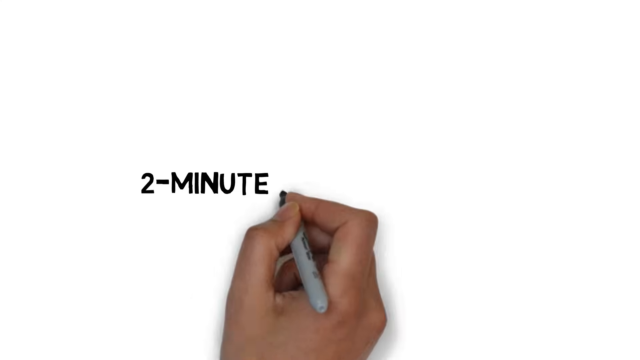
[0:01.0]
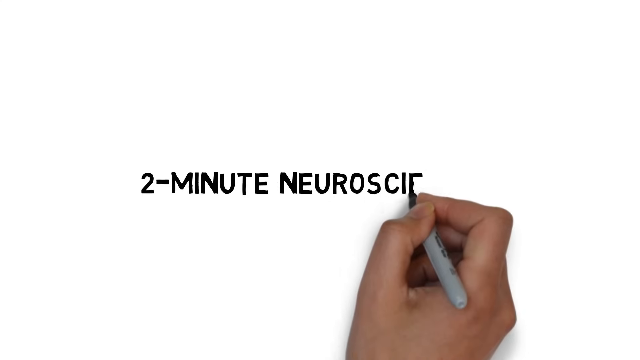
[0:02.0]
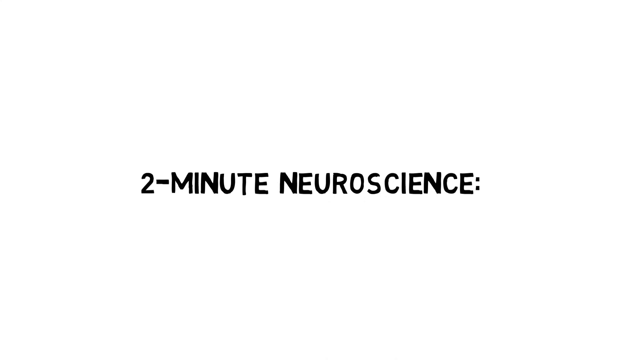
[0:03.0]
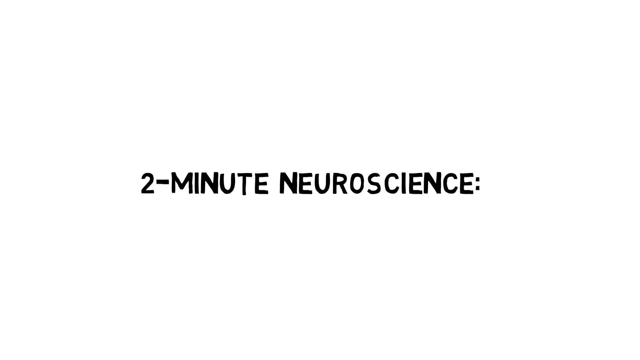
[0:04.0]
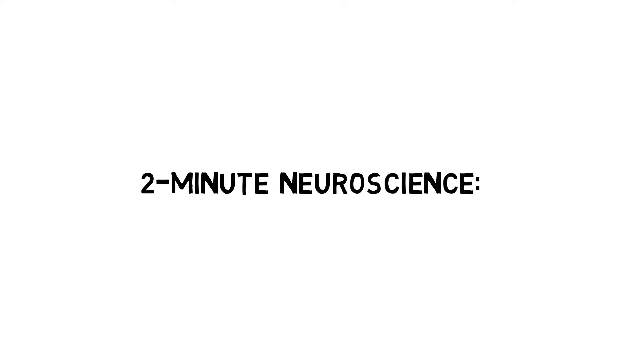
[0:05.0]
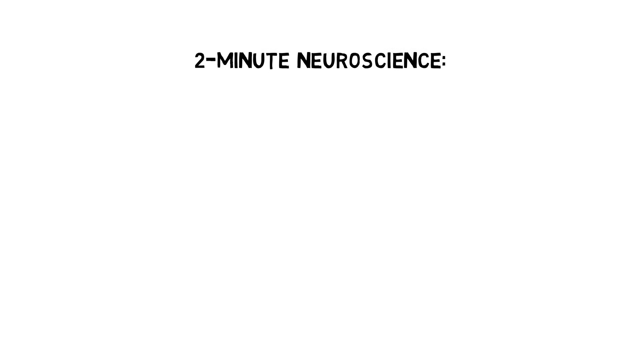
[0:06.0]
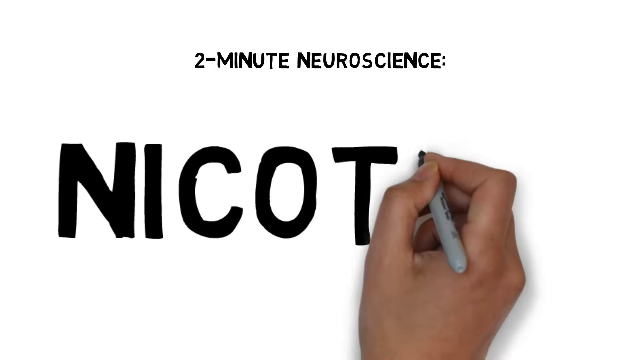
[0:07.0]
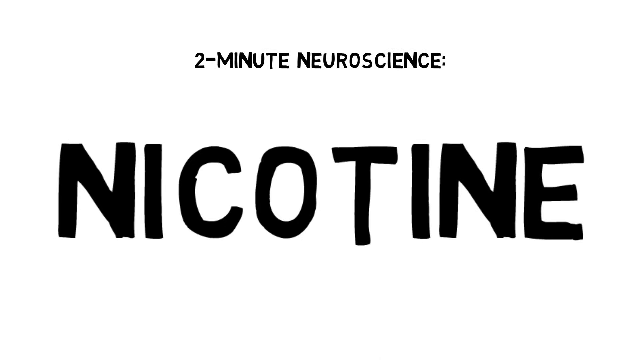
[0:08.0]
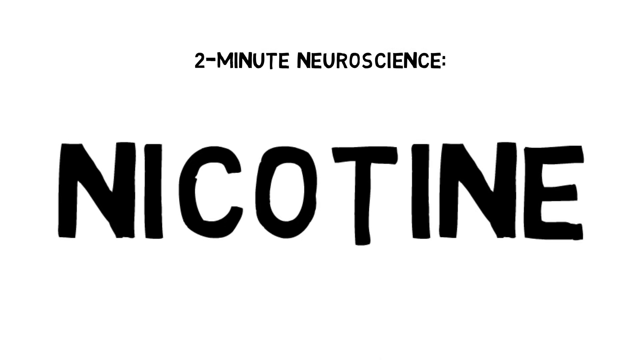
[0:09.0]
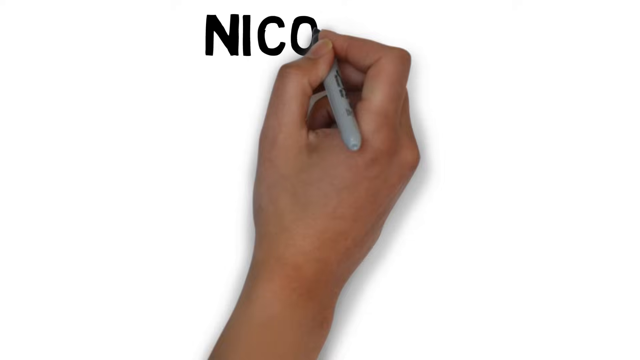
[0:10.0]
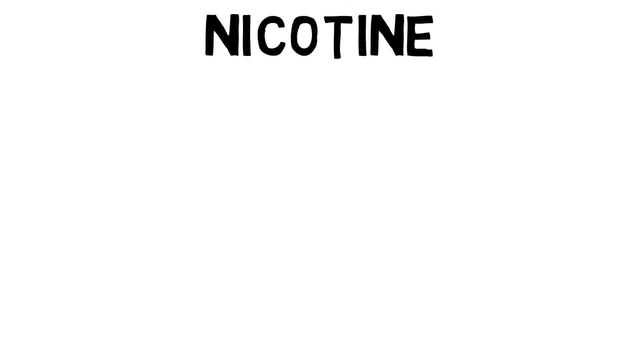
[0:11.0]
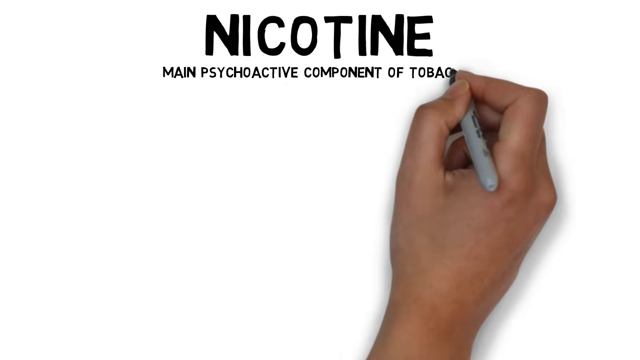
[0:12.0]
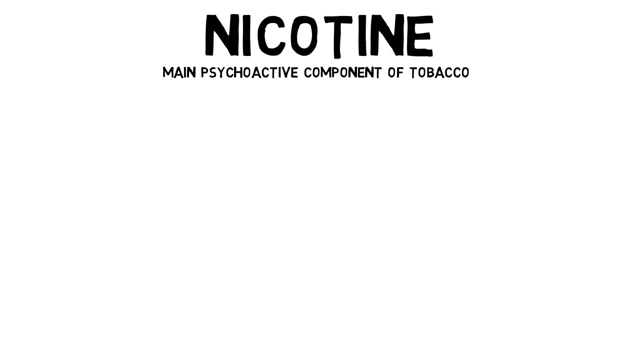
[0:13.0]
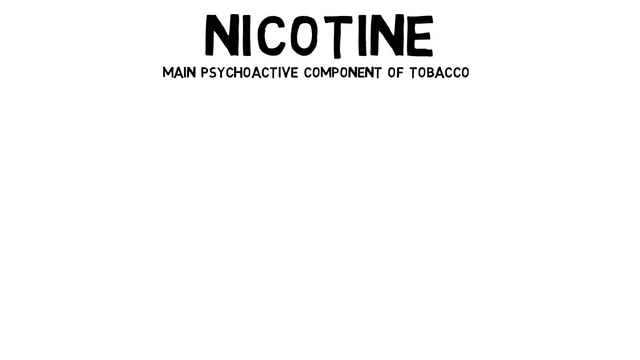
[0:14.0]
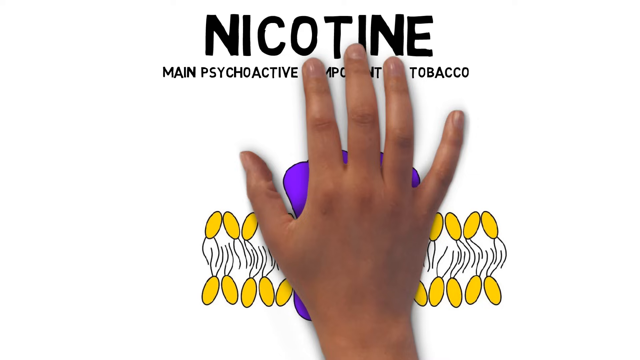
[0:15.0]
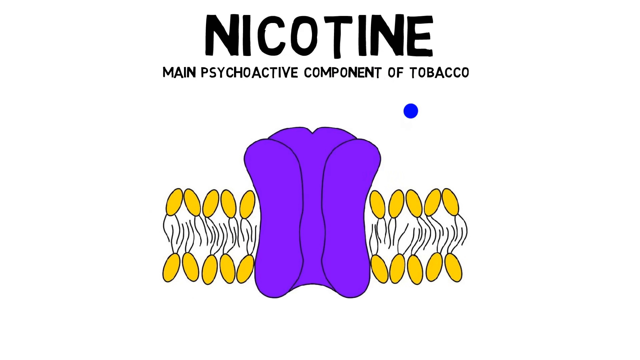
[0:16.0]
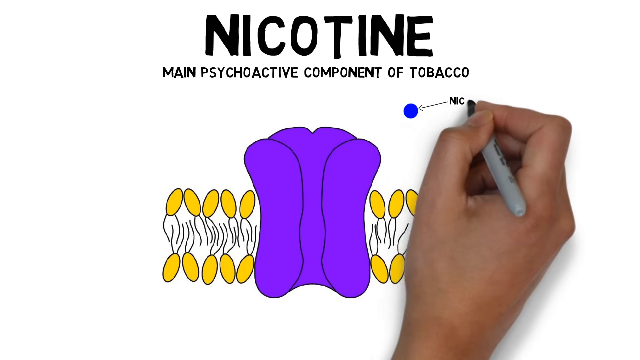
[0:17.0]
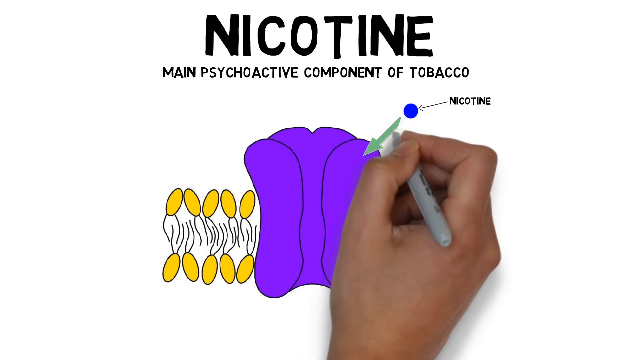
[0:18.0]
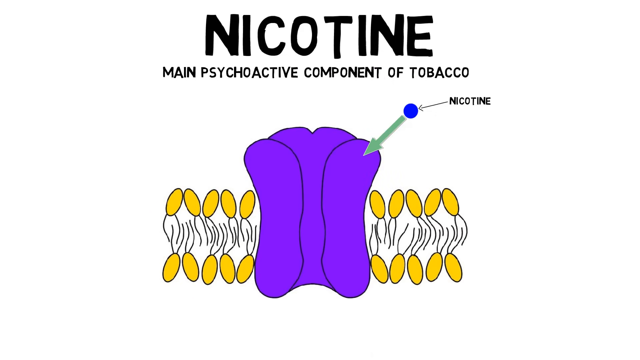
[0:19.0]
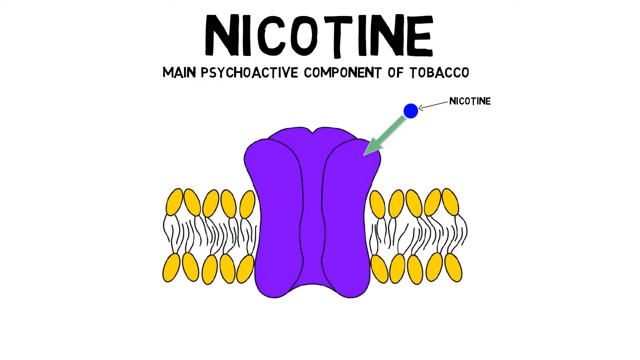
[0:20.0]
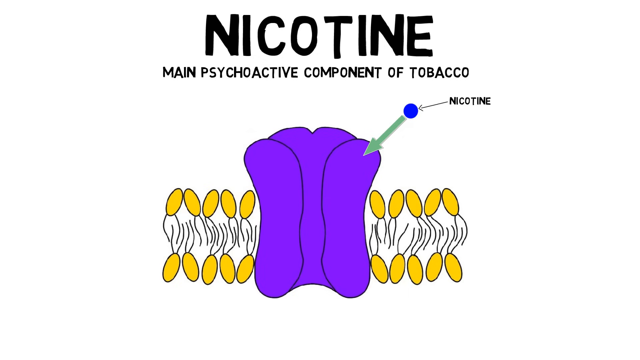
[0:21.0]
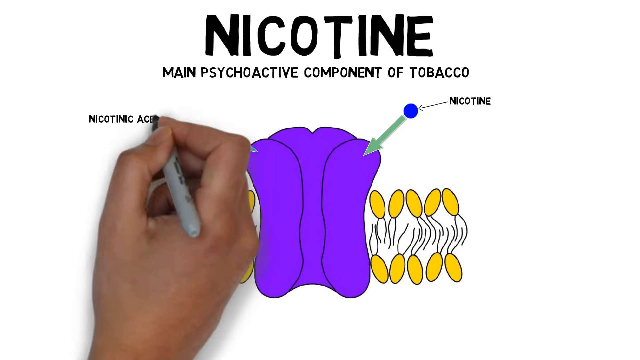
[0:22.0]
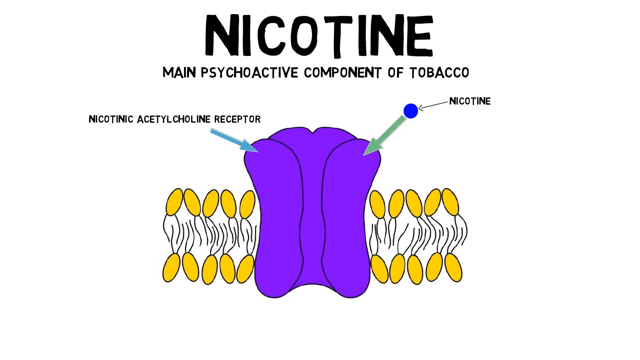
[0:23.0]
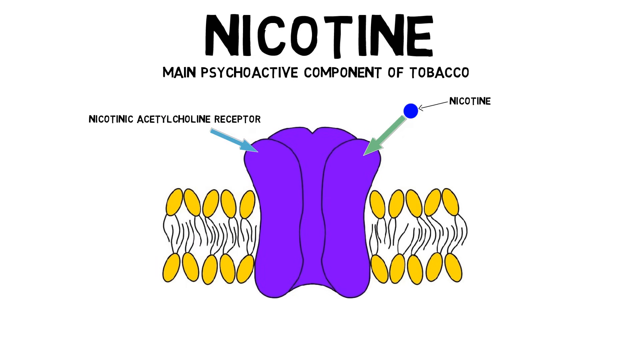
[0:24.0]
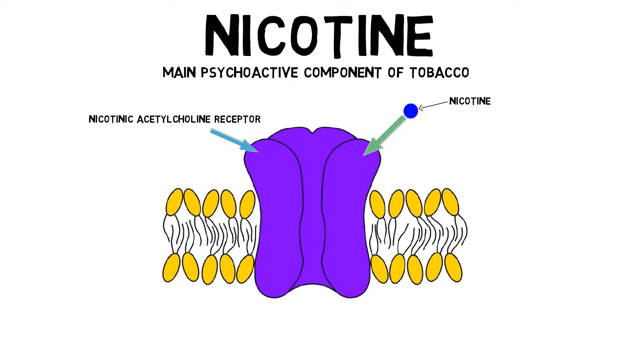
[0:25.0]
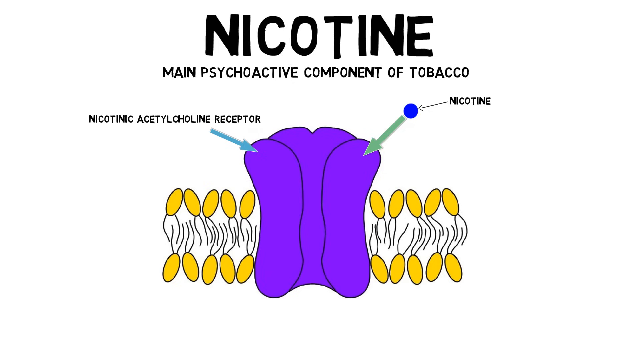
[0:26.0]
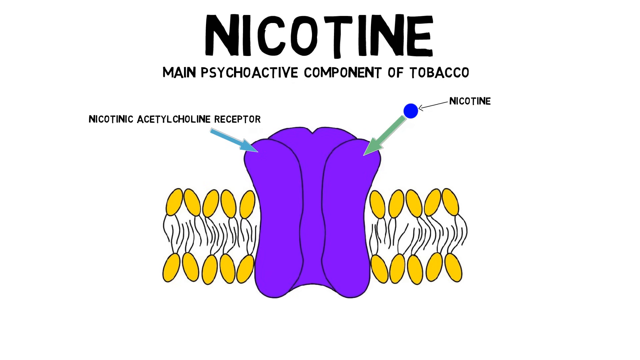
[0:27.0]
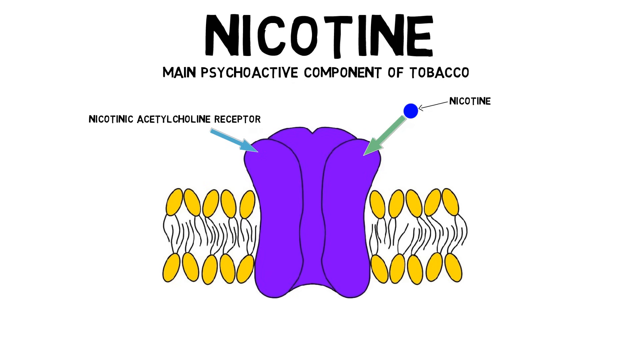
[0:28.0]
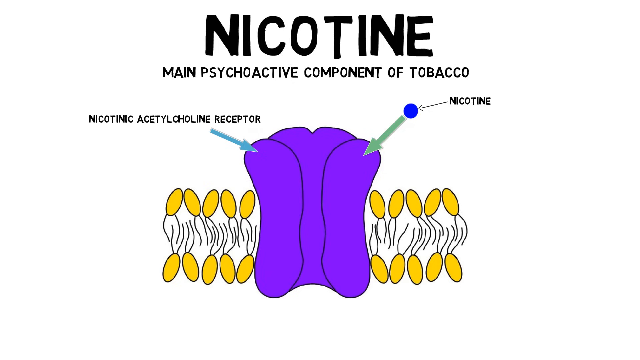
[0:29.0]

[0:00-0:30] The screen is mostly white, with a fade of gray toward the bottom that finally turns to black at the very bottom. A hand appears; it is a photograph of a hand, and it moves as a block: the fingers don't flex and the hand stays in the same position, but it moves as if it is writing. It writes "two minutes neuroscience:" and, underneath in larger letters, "nicotine". The screen then shifts to a blank screen with the word "nicotine" as its title. The hand writes the subtitle "main psychoactive component of tobacco". Underneath, in the main section of the screen, the hand draws a diagram. In the middle is a purple image, an oblong shape stretched from top to bottom with two long ovals on its sides. On either side of the purple shape are smaller yellow ovals with tails behind them, arranged in two rows. The purple shape is labeled "nicotinic acetylcholine receptor".